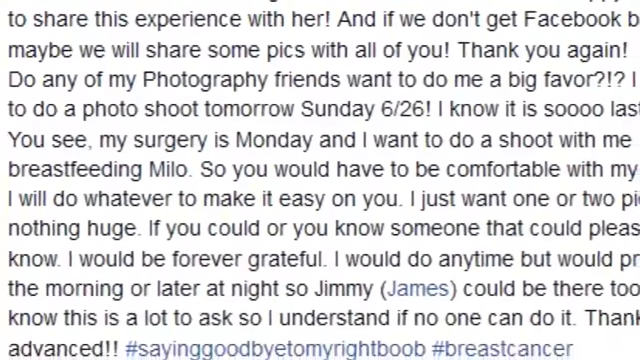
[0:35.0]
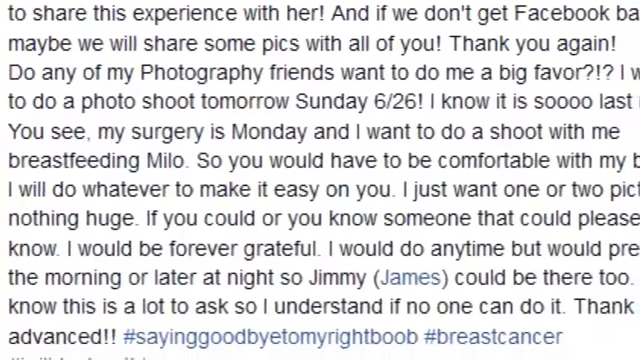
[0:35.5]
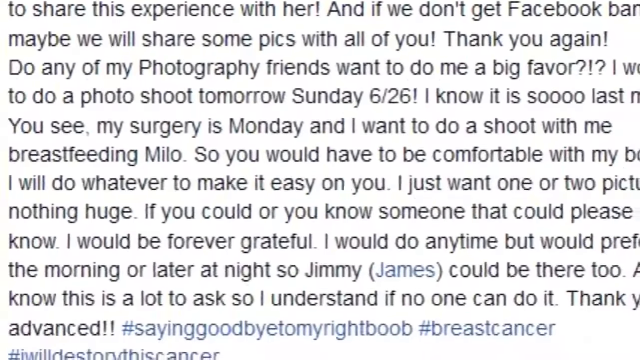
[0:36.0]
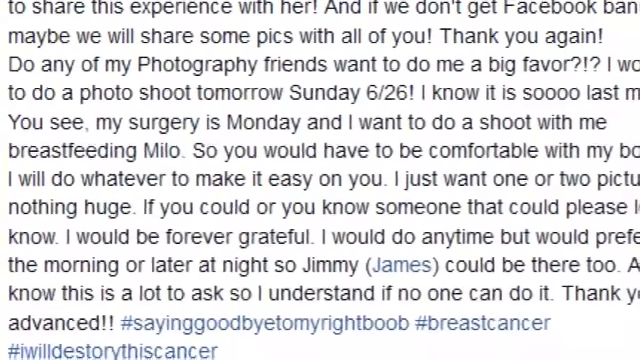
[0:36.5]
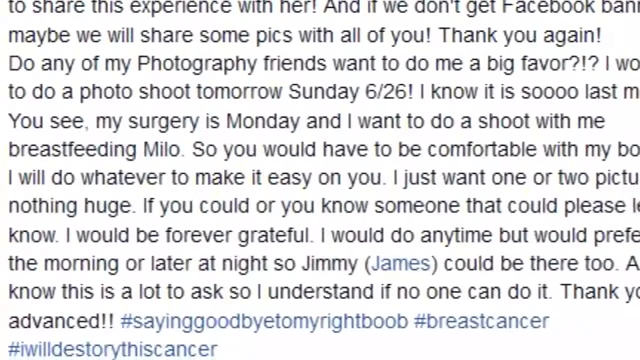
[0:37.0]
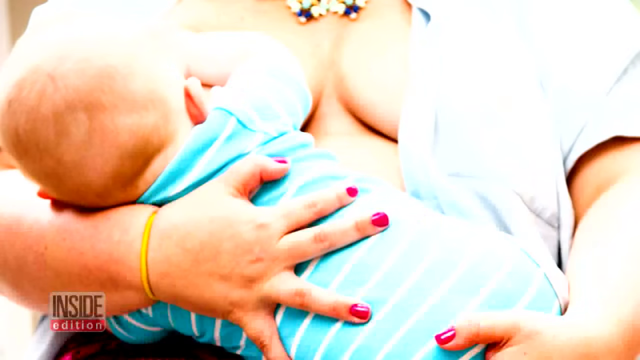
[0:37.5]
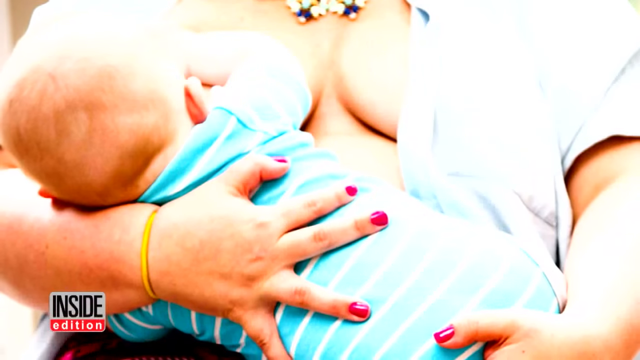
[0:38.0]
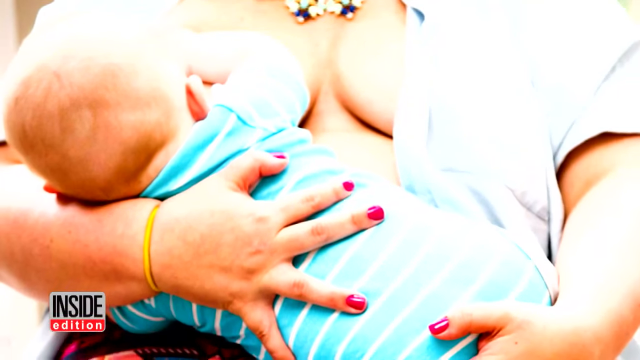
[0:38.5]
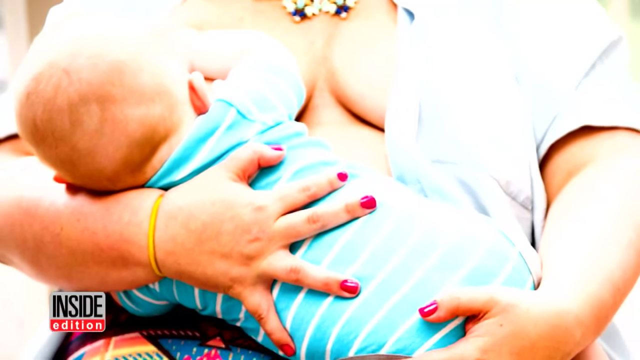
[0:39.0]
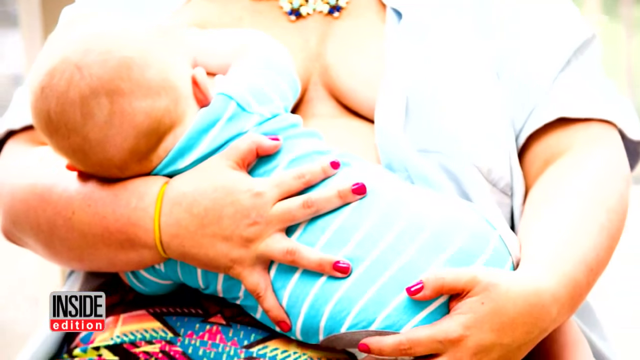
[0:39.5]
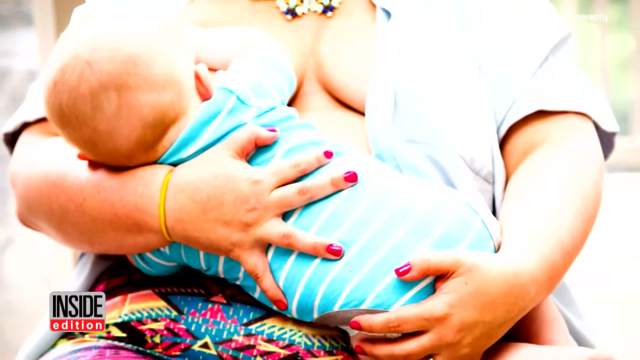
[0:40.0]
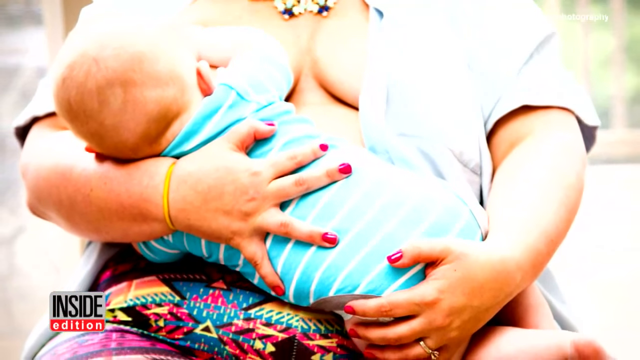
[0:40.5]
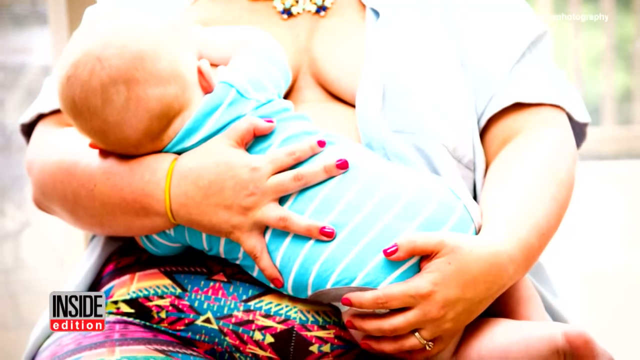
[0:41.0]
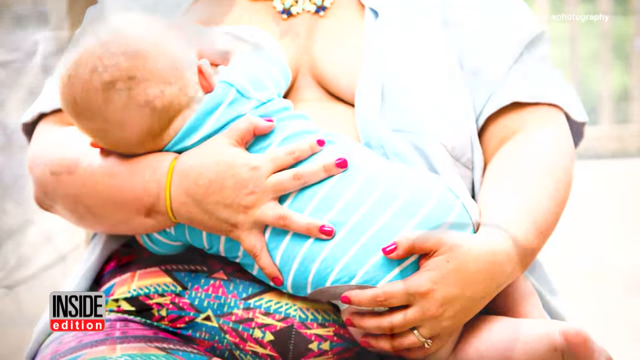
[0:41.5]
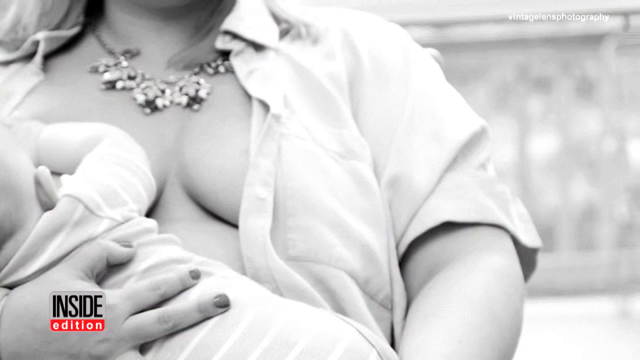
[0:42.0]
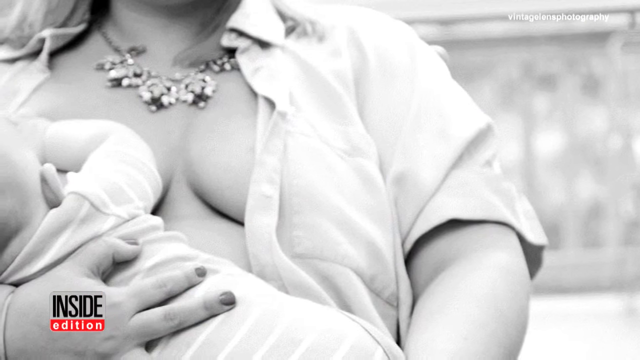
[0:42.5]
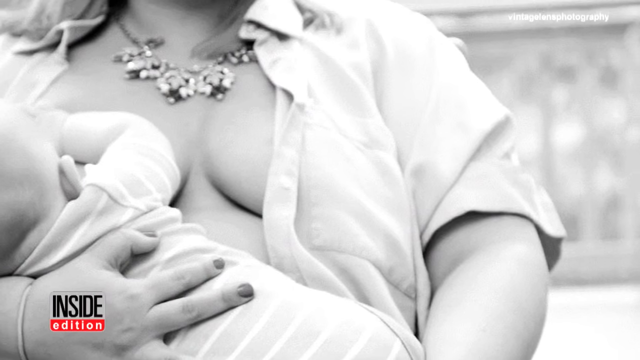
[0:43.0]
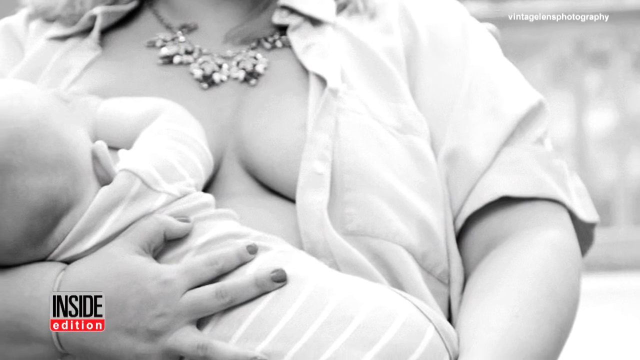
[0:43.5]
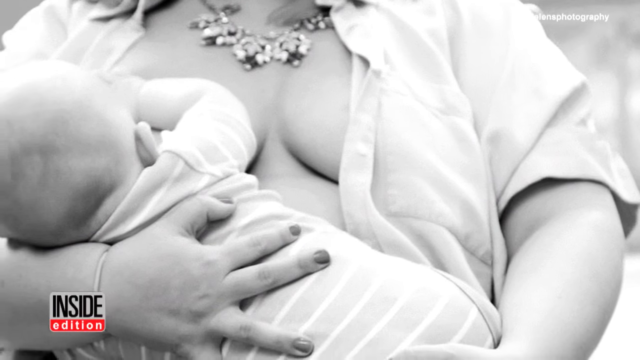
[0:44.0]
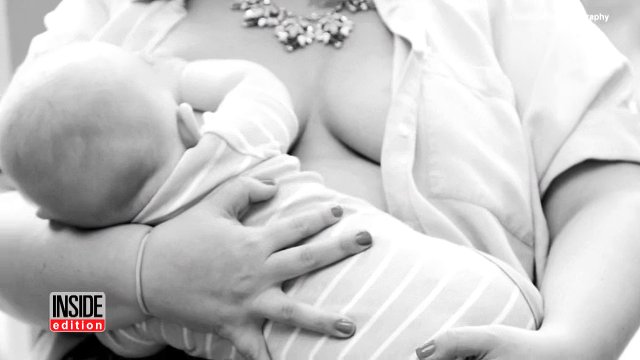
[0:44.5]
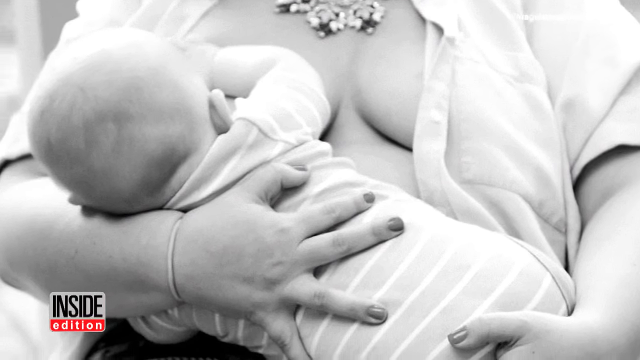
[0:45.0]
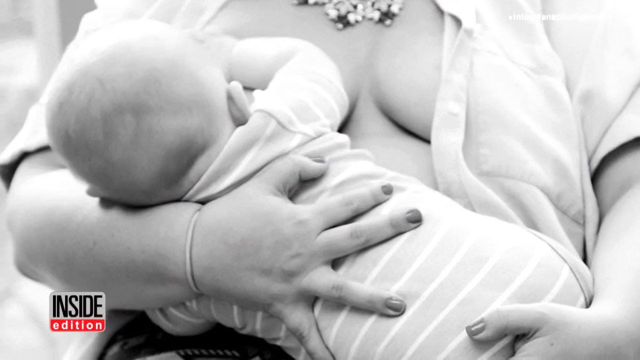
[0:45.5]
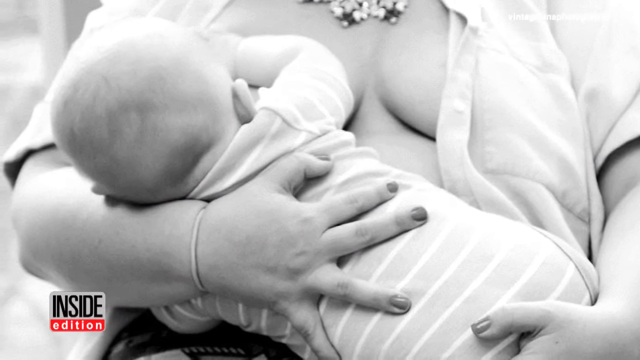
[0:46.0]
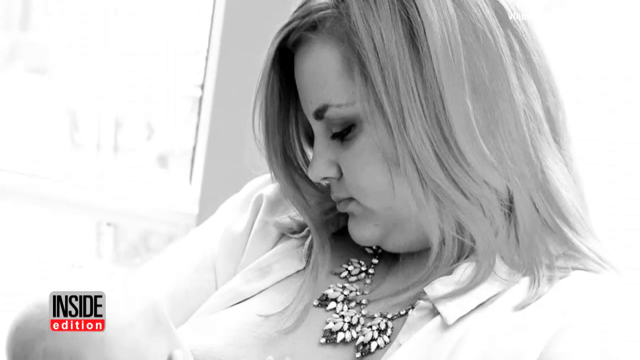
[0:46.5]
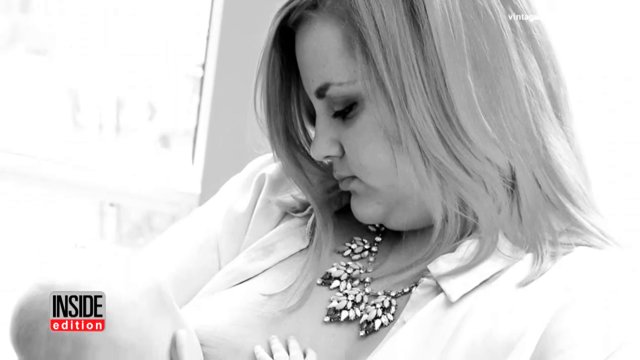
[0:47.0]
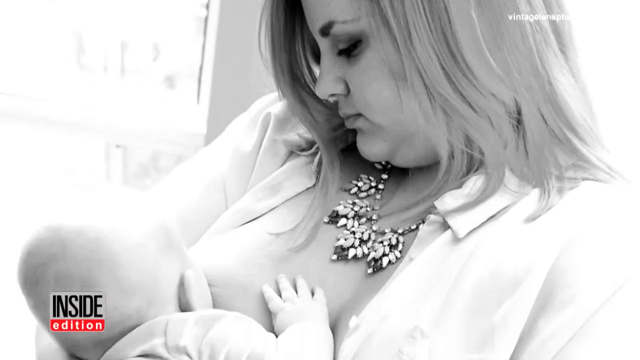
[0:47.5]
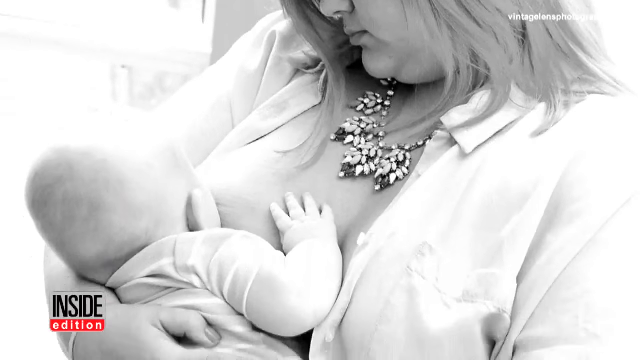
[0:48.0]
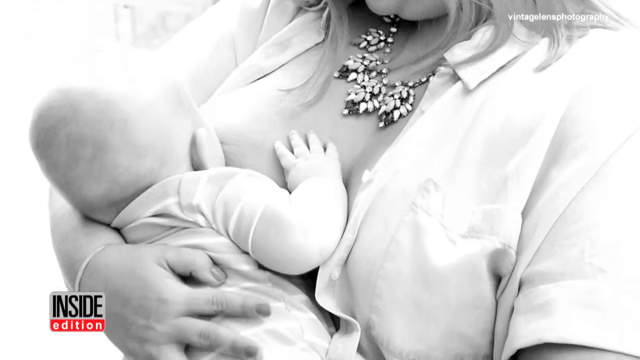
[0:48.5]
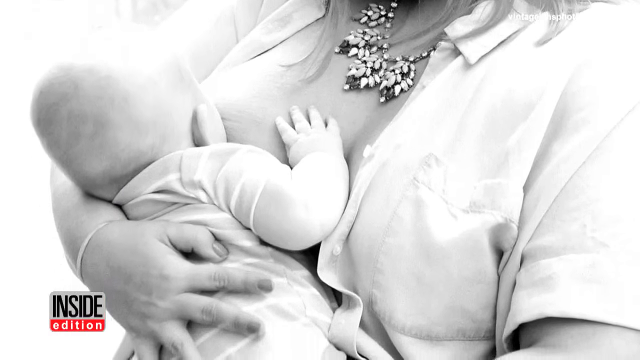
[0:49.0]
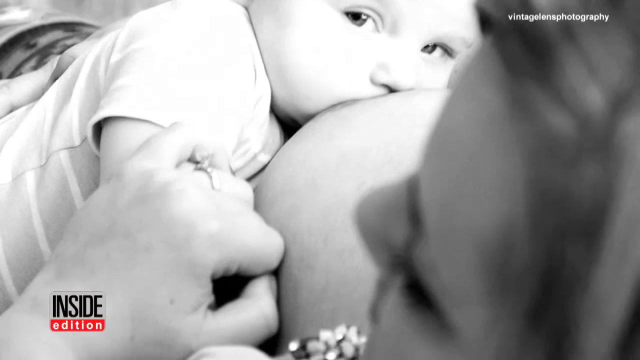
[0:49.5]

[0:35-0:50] A letter the mother has written is shown first. Then a picture shows the mom with part of her chest exposed and a baby breastfeeding, followed by another of the mom looking down as she breastfeeds the baby. The first picture is in color, and she wears a necklace and some bright colors; it shows more of the back of the baby and the front of the mom's chest. The second picture is black and white and shows a side angle of her breastfeeding. The baby is not a newborn. The Inside Edition insignia is in the lower left corner, text in the right corner says you can subscribe, and text in the upper right corner mentions photography, crediting the photographer who took the pictures.